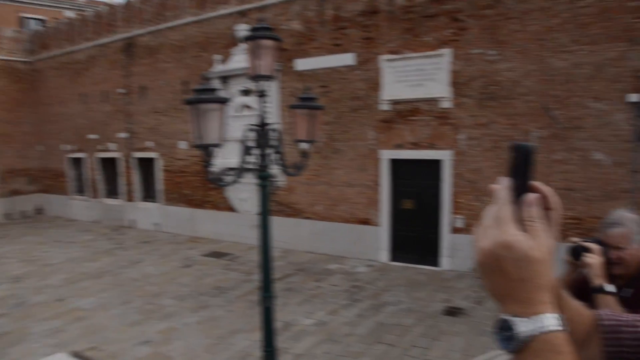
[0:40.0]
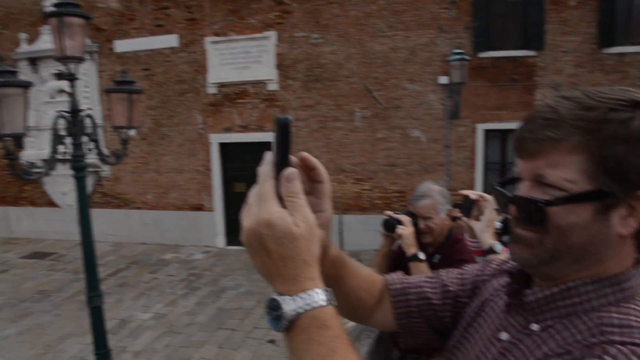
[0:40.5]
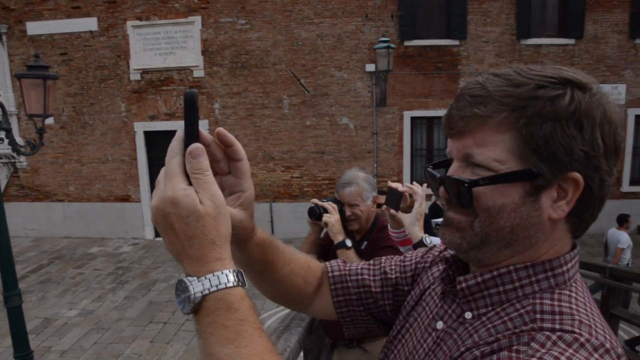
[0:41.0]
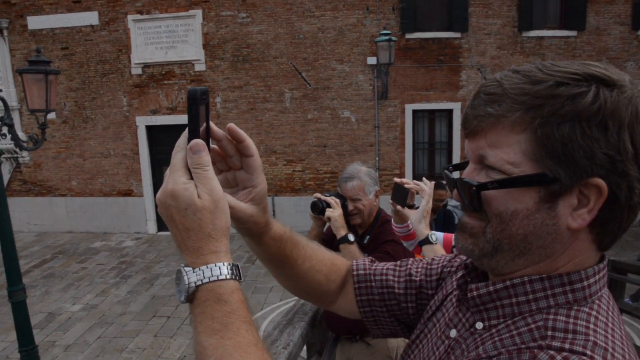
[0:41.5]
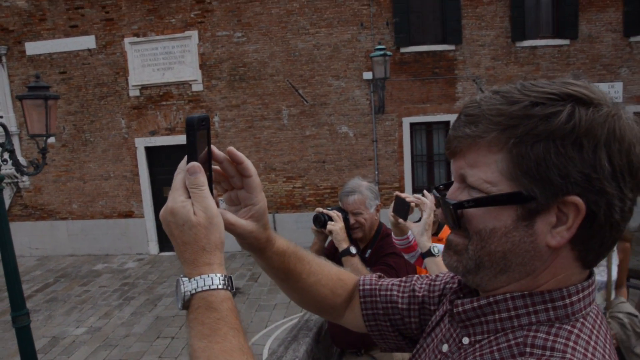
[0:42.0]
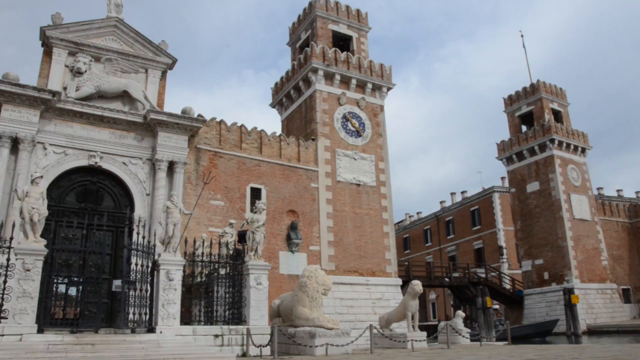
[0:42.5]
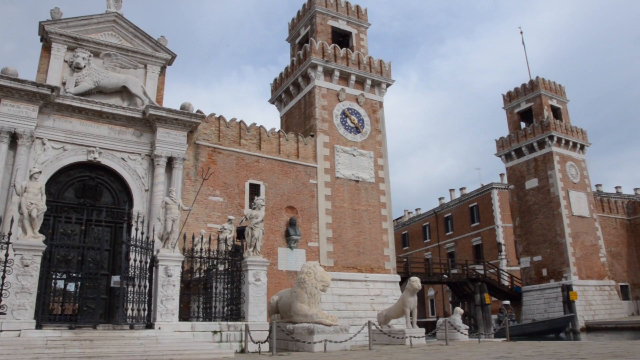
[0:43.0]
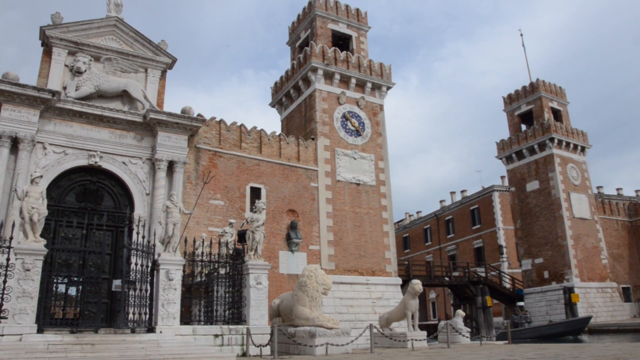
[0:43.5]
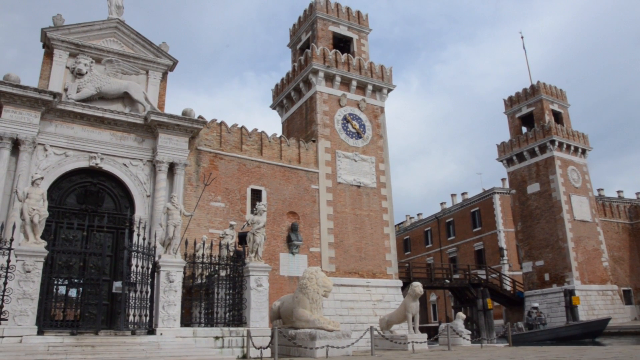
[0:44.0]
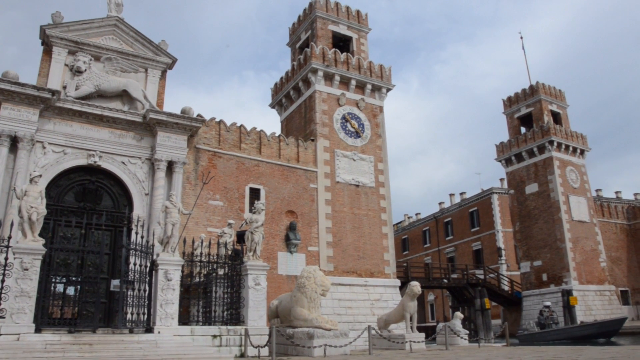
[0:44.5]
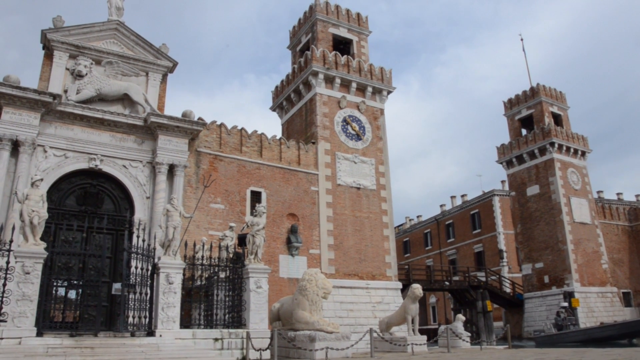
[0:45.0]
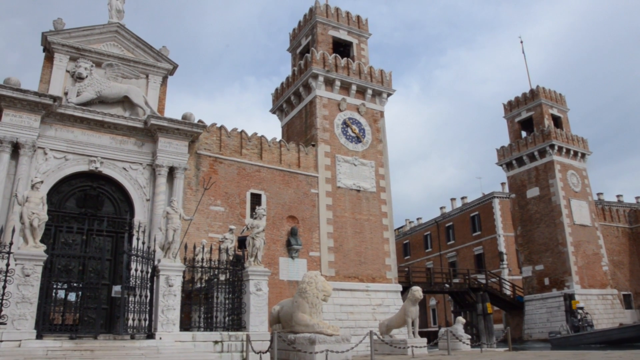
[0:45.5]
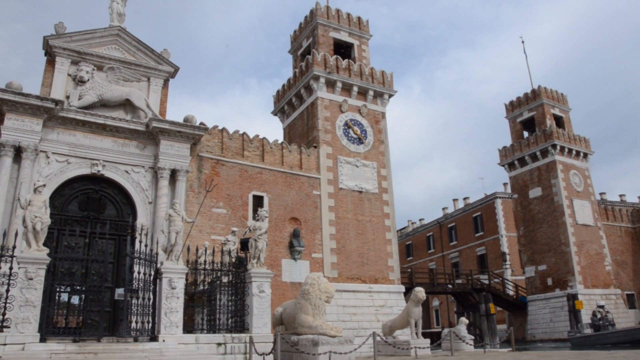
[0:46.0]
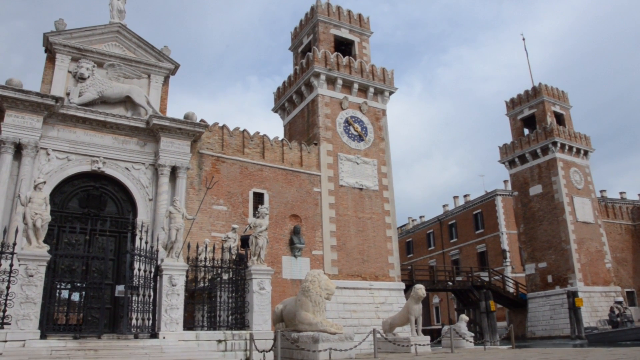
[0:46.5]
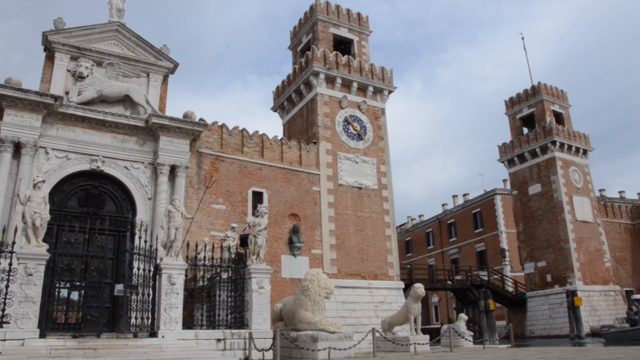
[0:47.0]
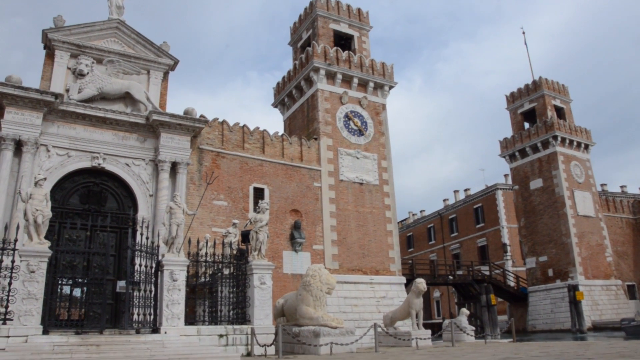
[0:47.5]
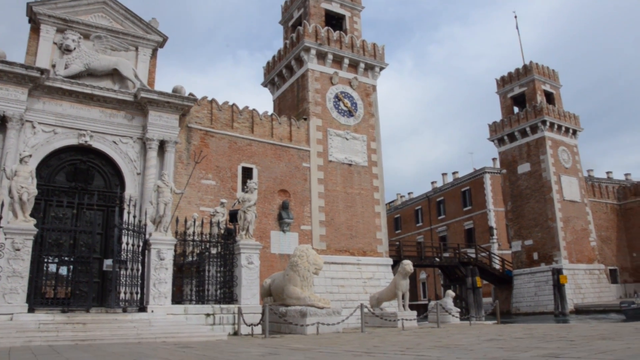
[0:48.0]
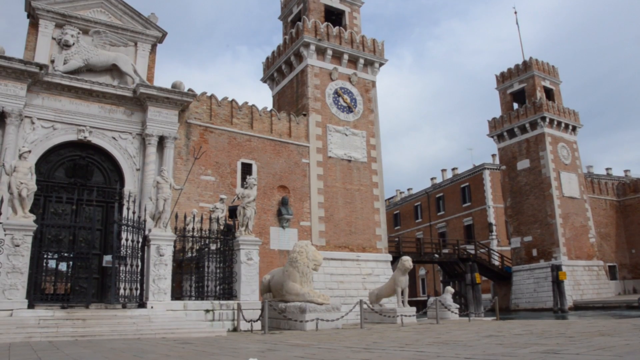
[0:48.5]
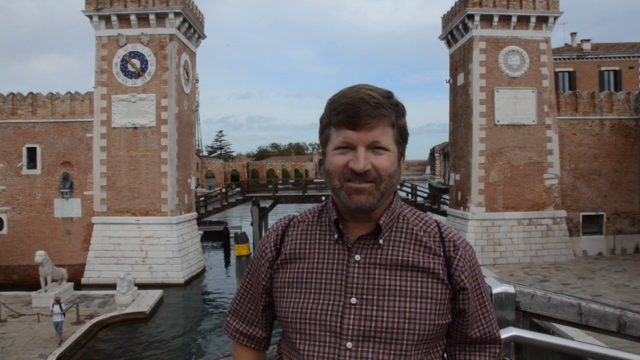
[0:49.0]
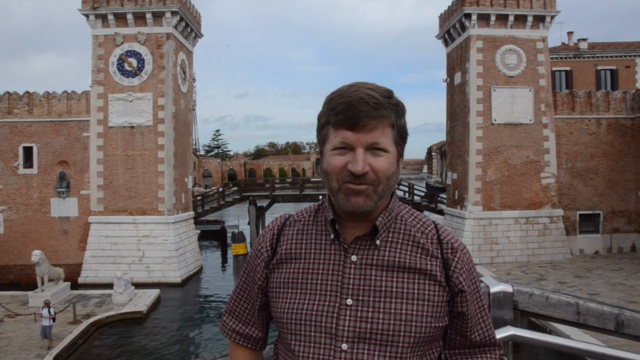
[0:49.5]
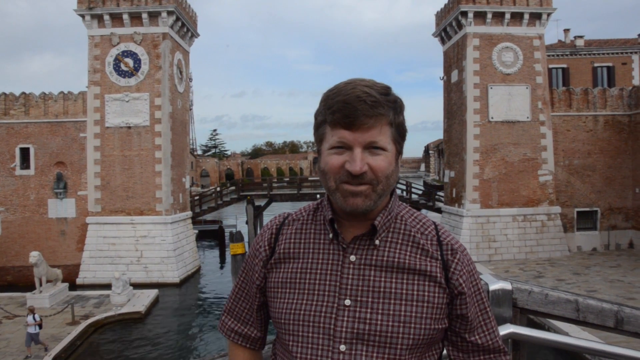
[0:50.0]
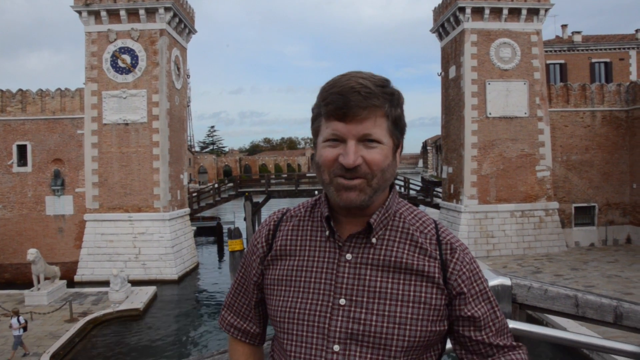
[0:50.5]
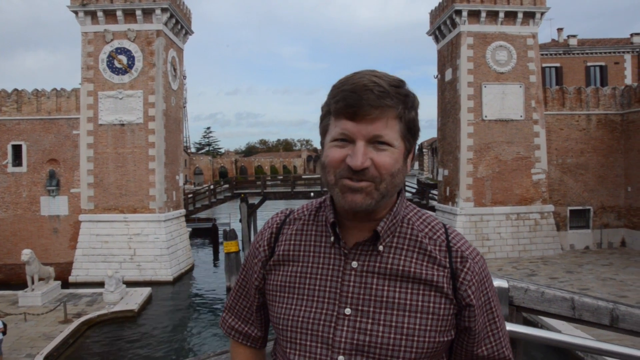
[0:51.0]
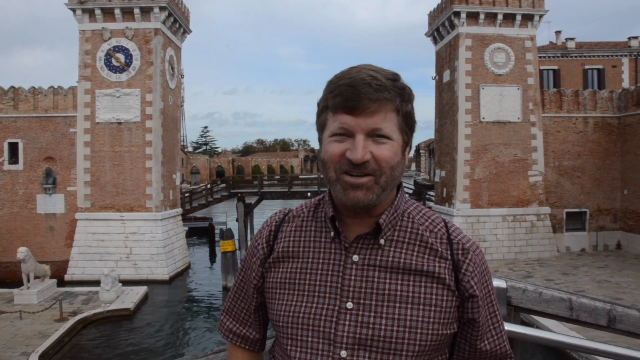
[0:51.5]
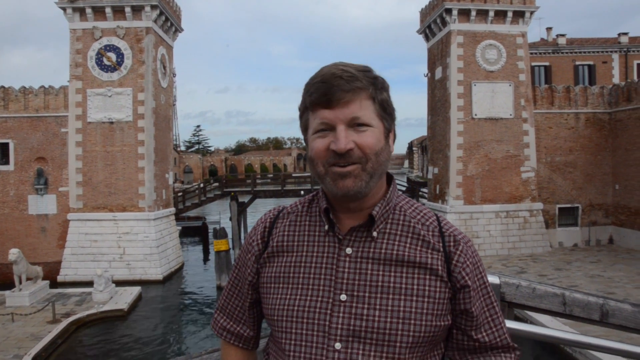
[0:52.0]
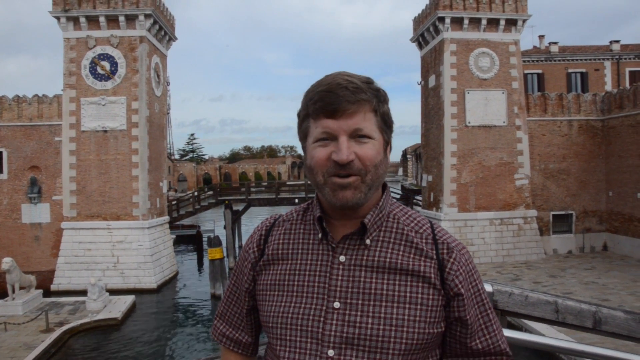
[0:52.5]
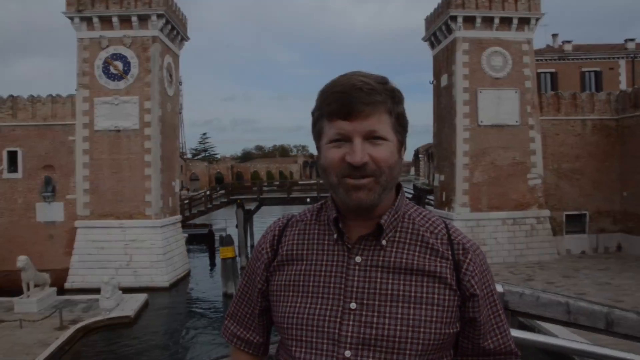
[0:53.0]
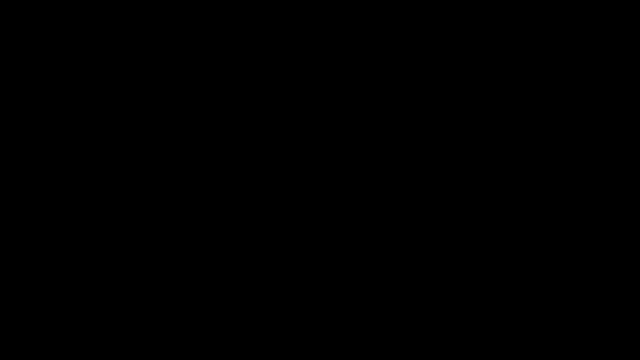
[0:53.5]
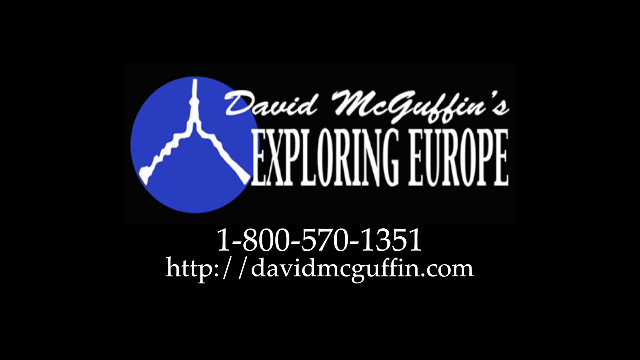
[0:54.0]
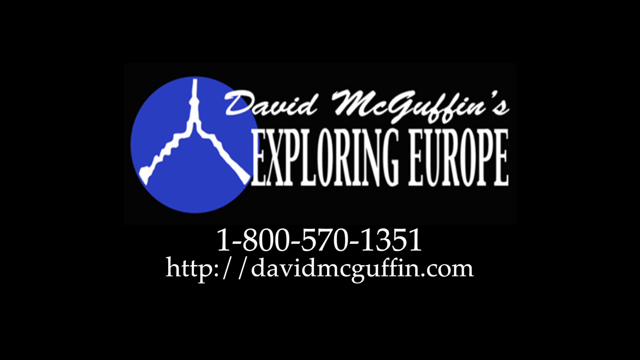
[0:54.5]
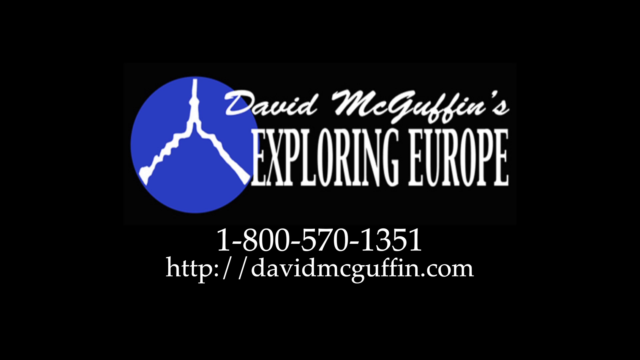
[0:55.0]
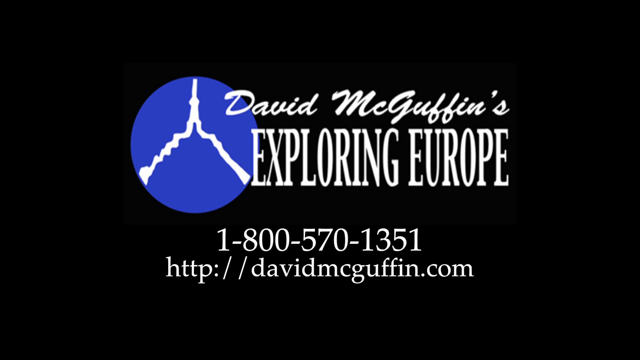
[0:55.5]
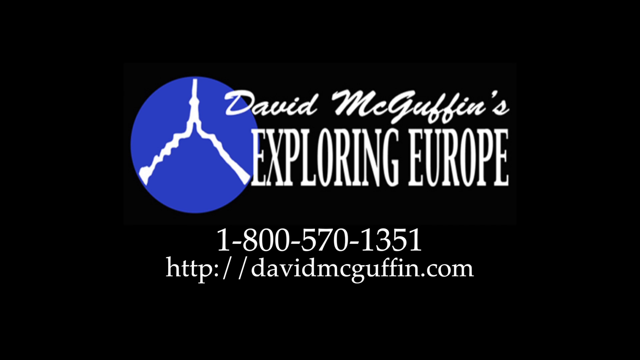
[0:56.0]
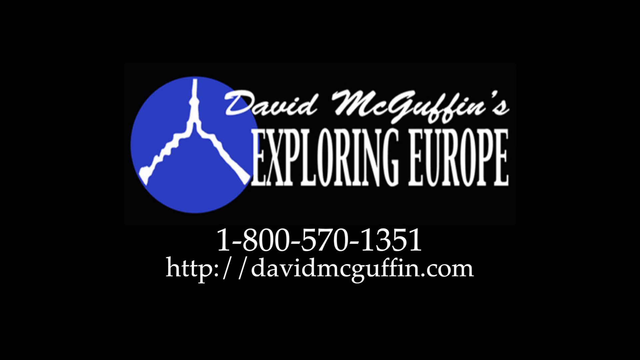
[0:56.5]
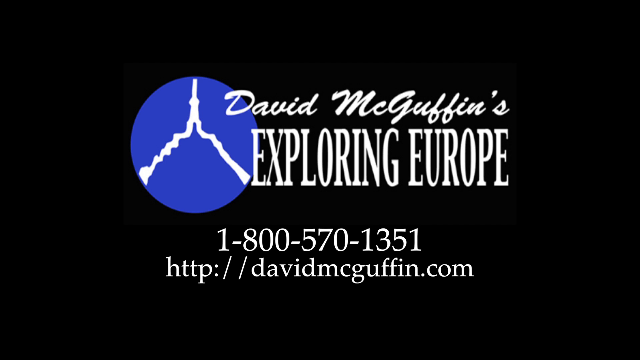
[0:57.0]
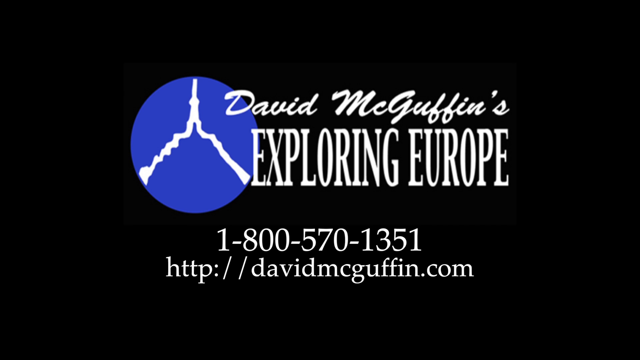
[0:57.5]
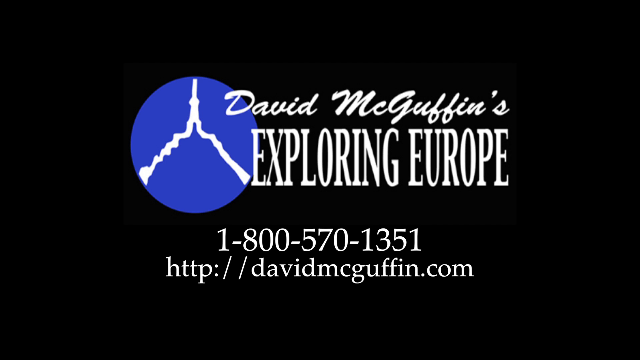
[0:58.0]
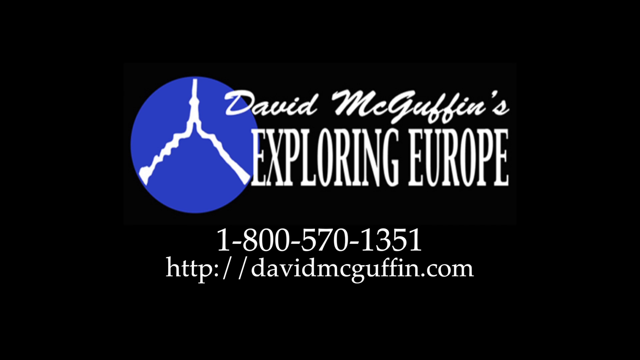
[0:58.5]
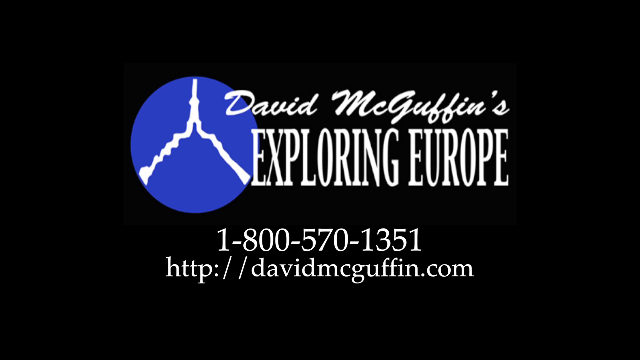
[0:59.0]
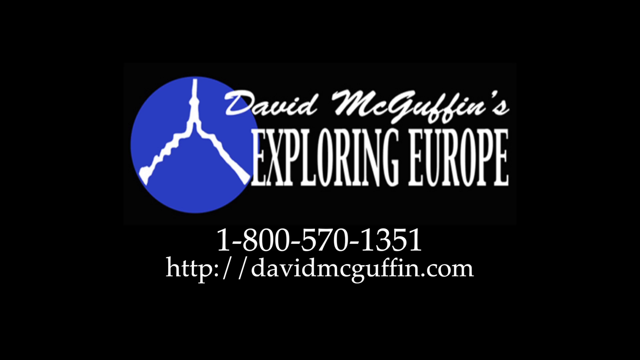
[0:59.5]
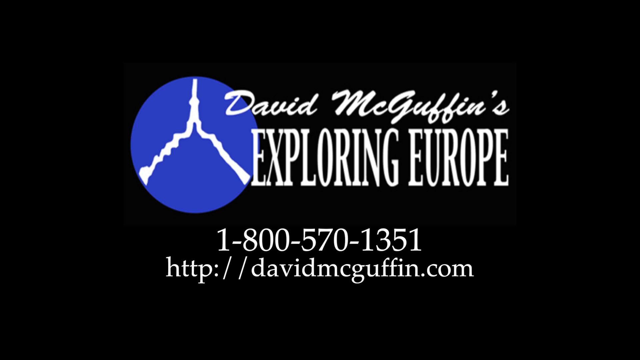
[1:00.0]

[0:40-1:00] A man wears dark sunglasses and a red, blue and burgundy plaid long-sleeve shirt with white buttons. The man is recording while walking down the street, with a woman in a yellow jacket walking in front of him. His hand appears in the frame, and the only thing visible is his hand holding his sunglasses. He films people walking across the pedestrian bridge on the other side of the street. At one point his sunglasses rest on his nose as he struggles to see the screen of his cell phone while trying to film something happening across the street, though it is unclear what exactly he is trying to focus on. The streets are lined with what appears to be old cobblestone, and there are multi-colored buildings across the canal.